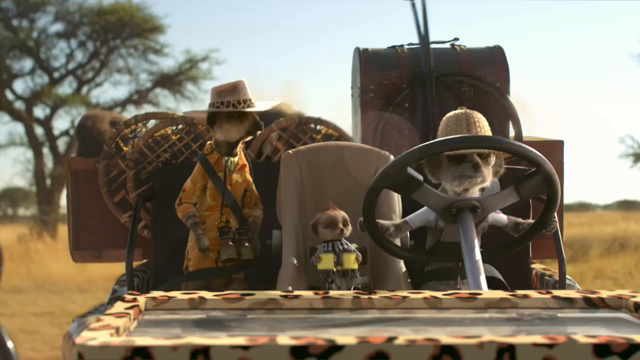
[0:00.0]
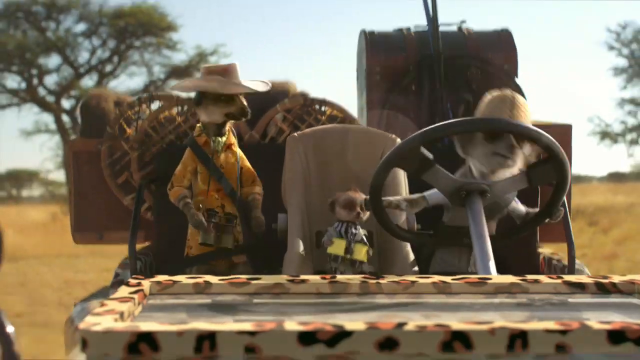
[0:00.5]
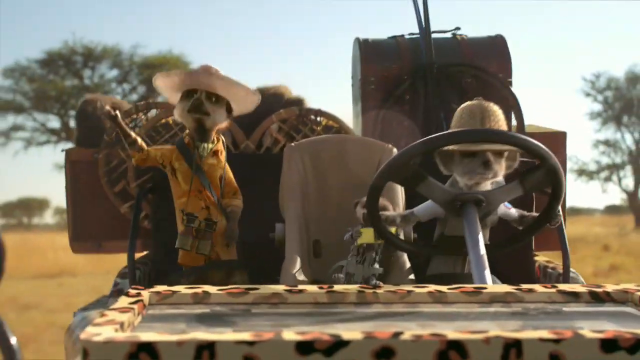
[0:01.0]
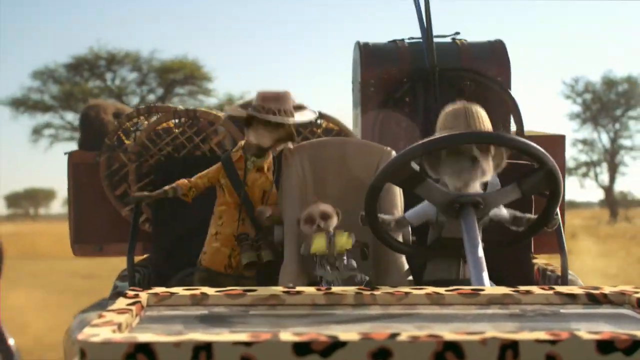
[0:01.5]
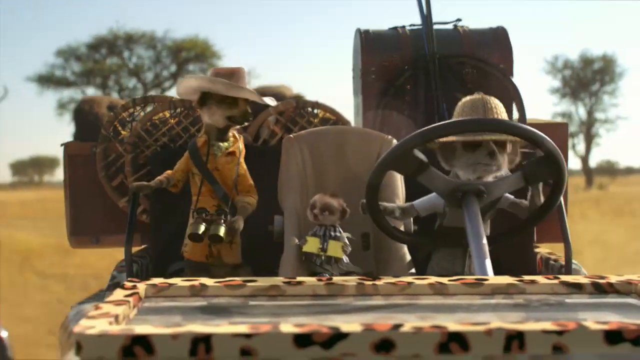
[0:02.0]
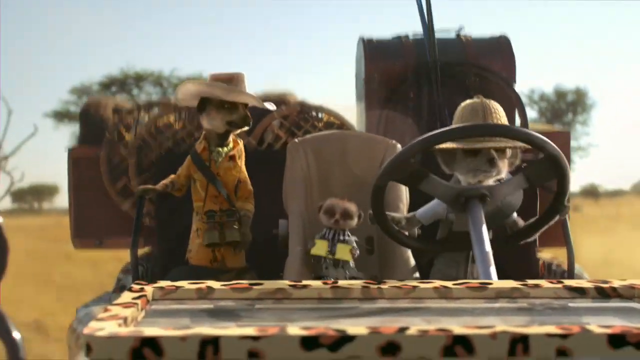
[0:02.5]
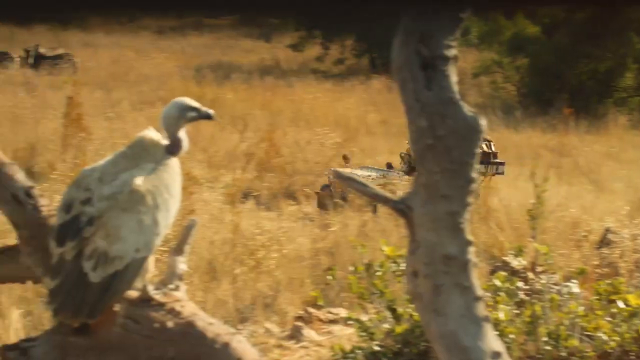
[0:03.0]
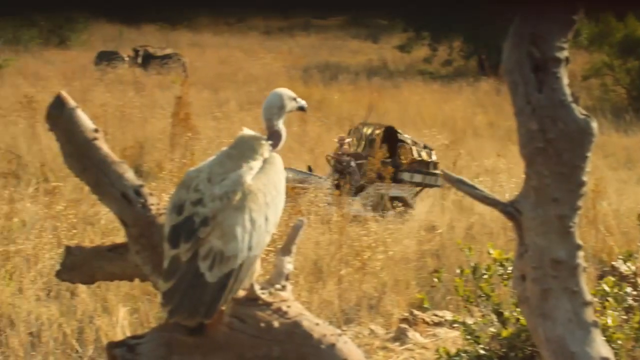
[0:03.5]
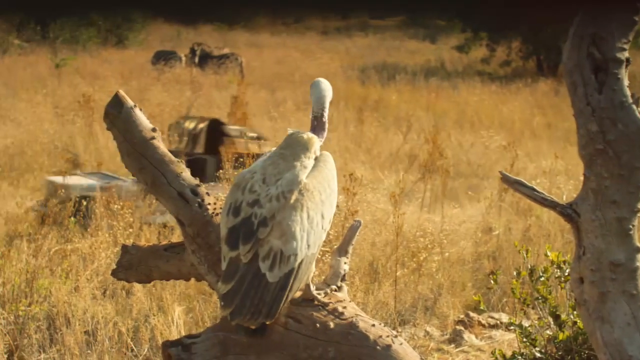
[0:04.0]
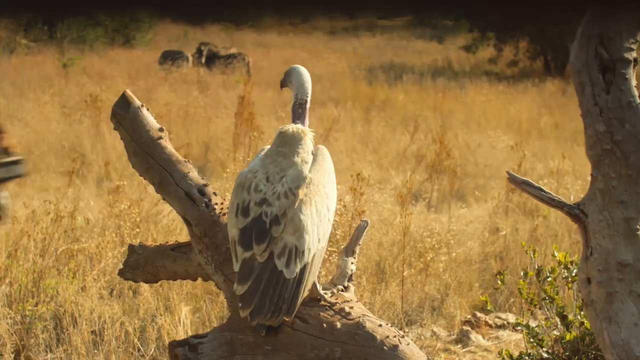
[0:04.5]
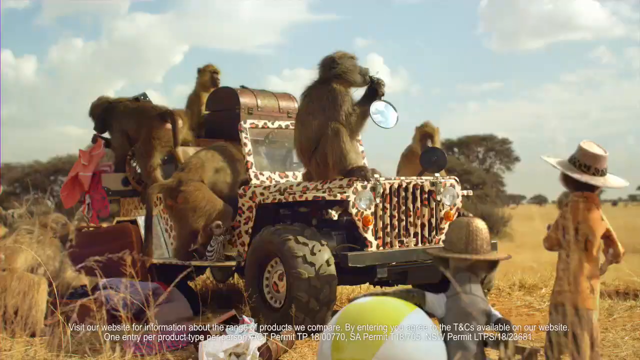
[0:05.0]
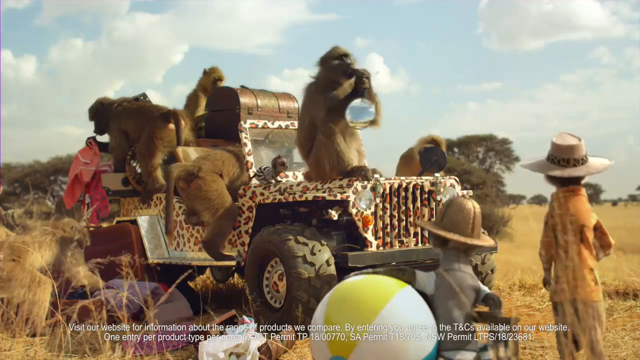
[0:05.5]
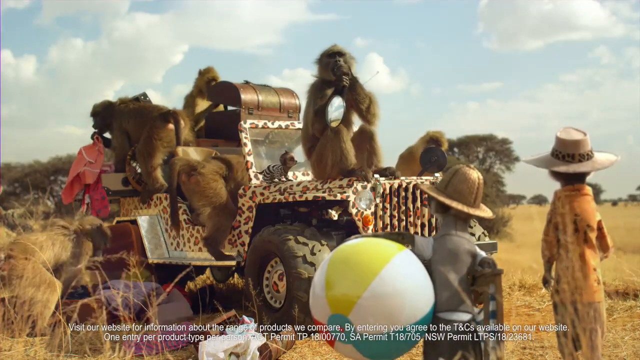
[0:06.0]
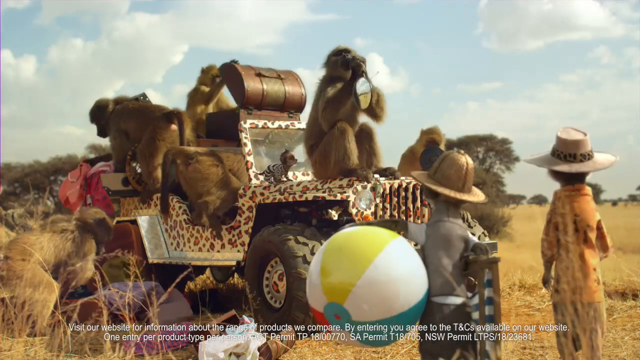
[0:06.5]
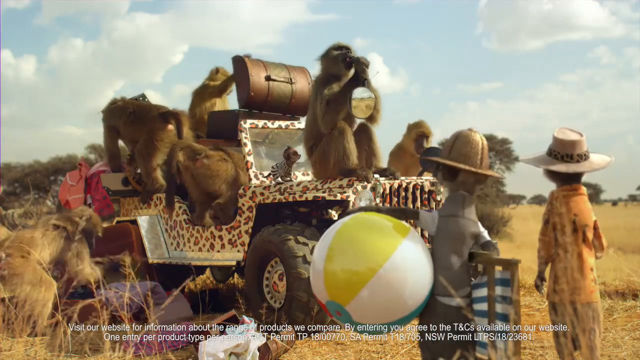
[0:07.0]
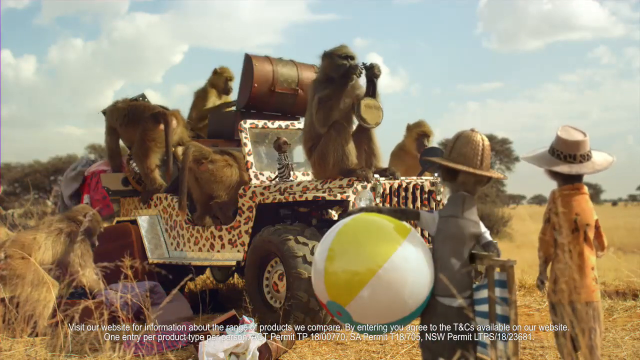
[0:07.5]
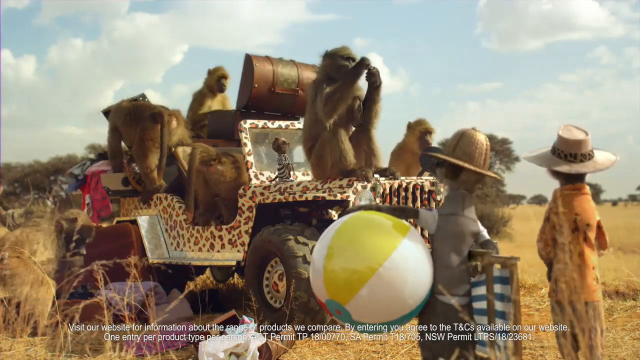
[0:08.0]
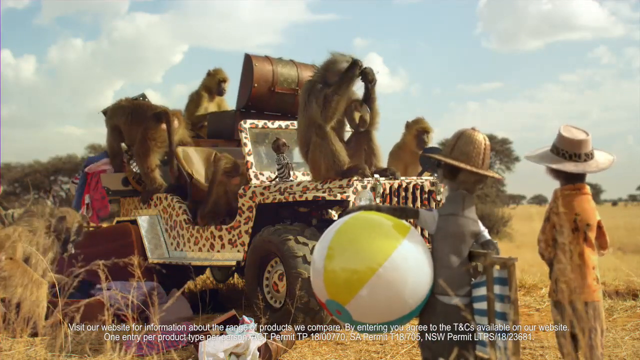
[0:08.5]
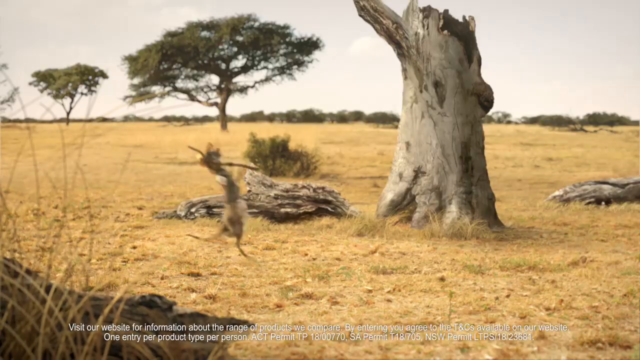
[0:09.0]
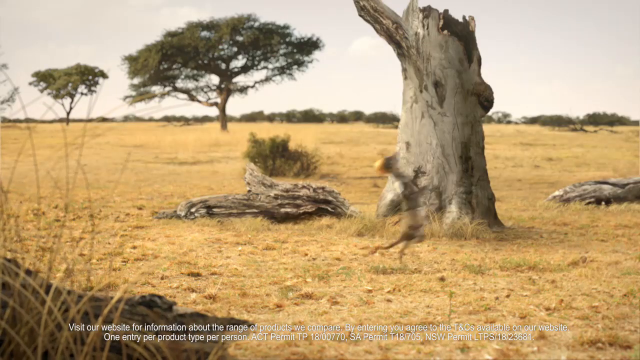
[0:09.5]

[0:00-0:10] A monkey drives a car, a jeep.